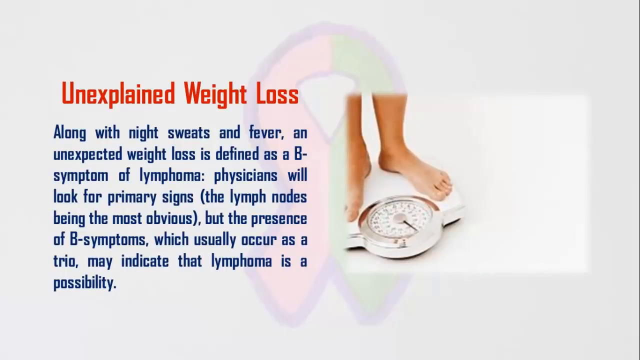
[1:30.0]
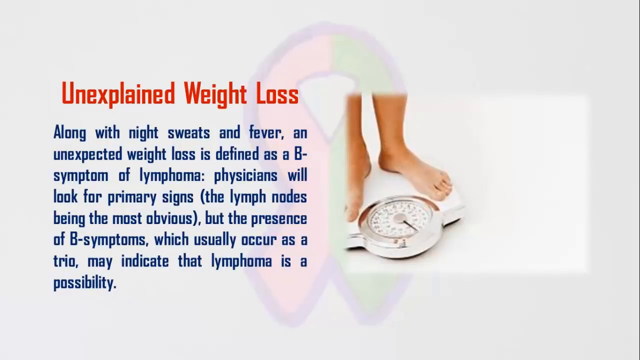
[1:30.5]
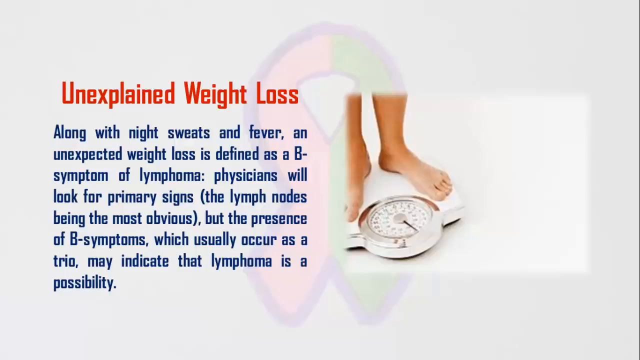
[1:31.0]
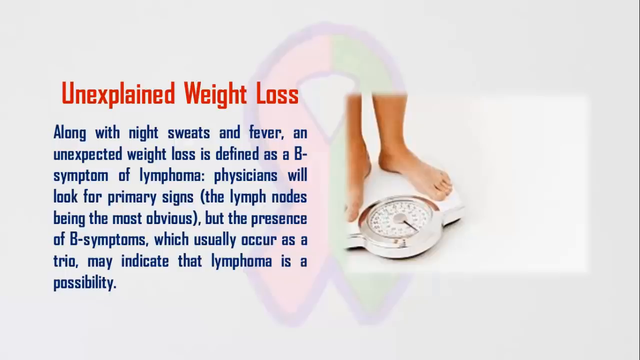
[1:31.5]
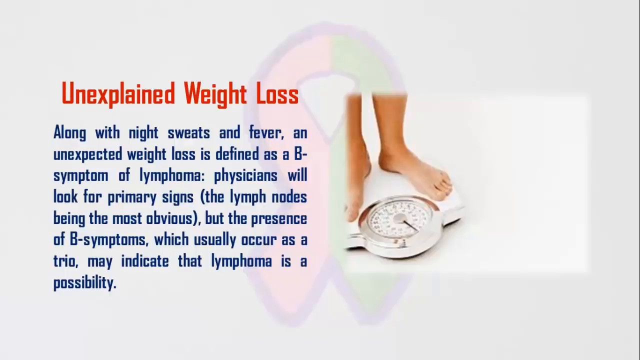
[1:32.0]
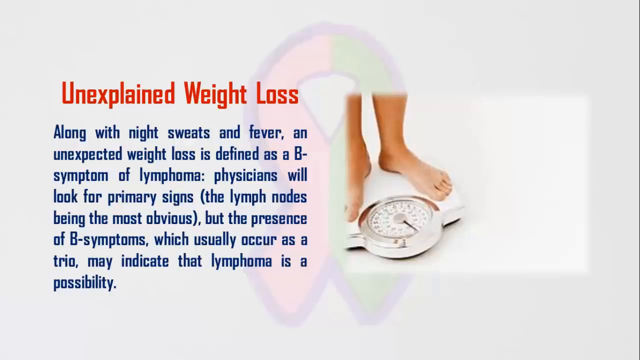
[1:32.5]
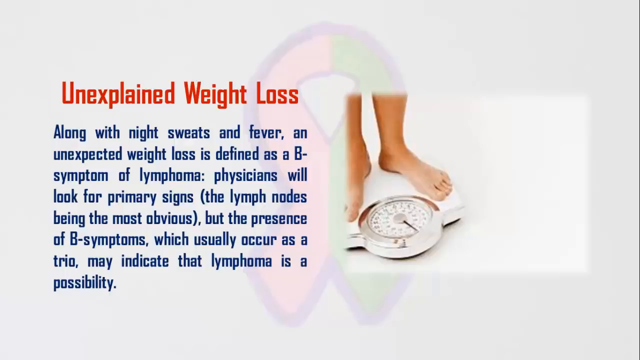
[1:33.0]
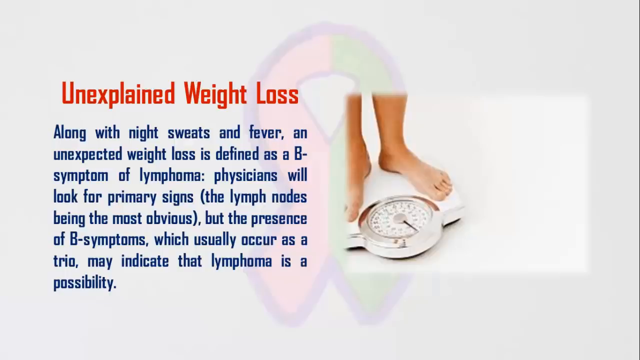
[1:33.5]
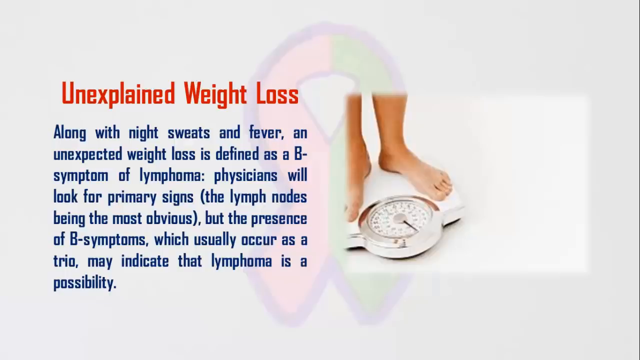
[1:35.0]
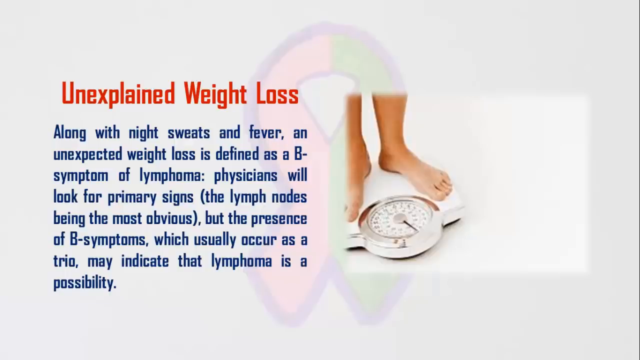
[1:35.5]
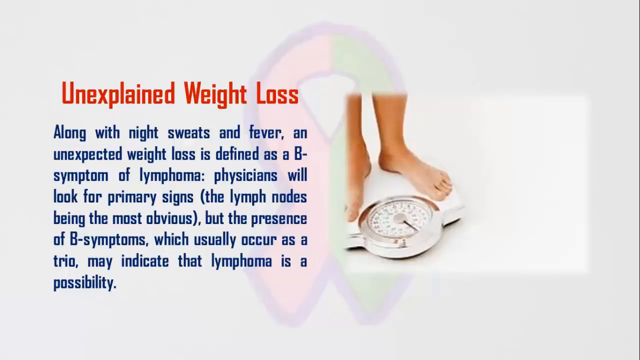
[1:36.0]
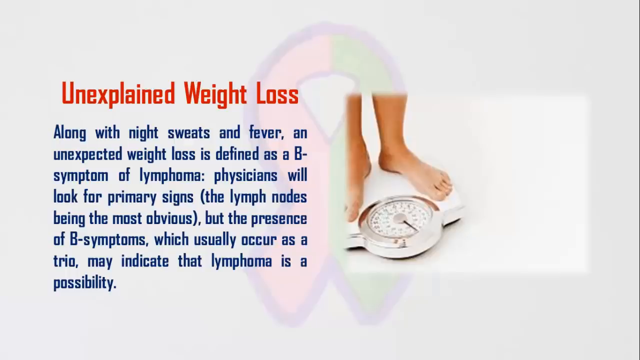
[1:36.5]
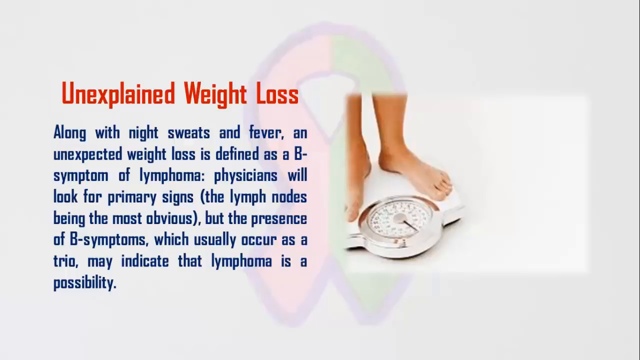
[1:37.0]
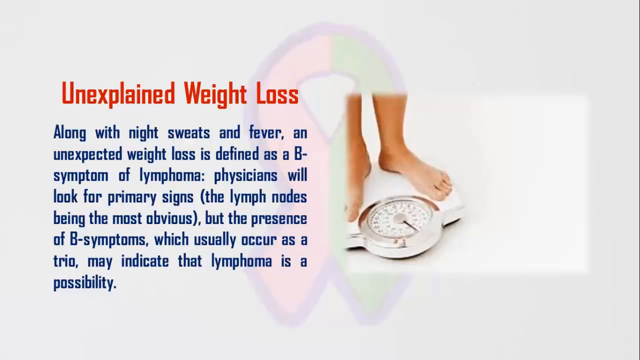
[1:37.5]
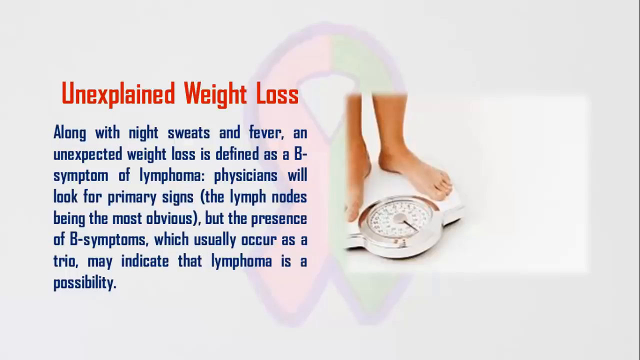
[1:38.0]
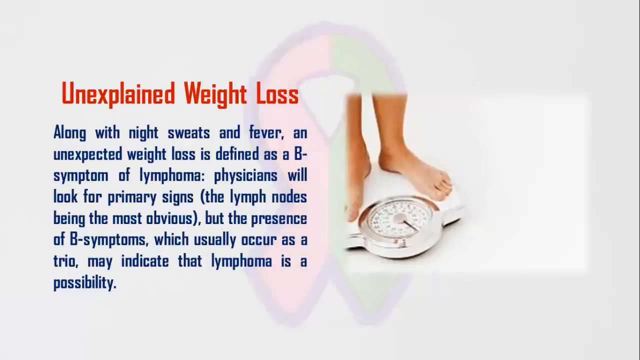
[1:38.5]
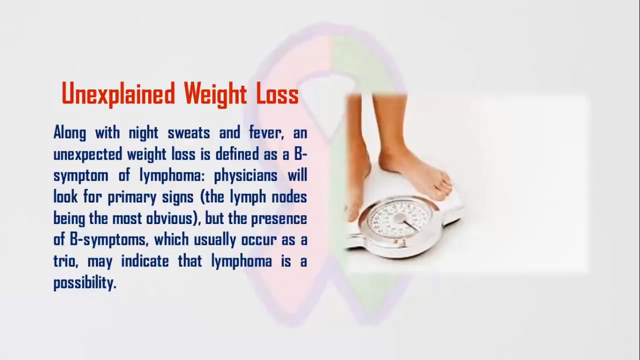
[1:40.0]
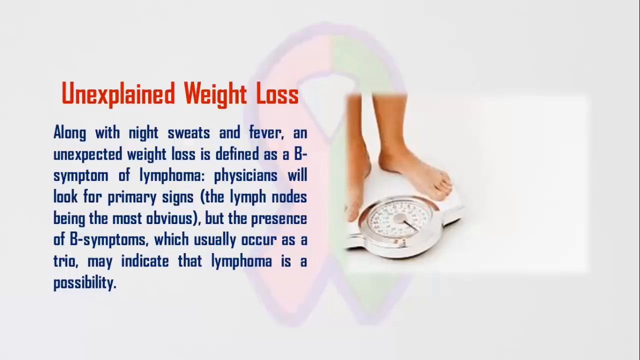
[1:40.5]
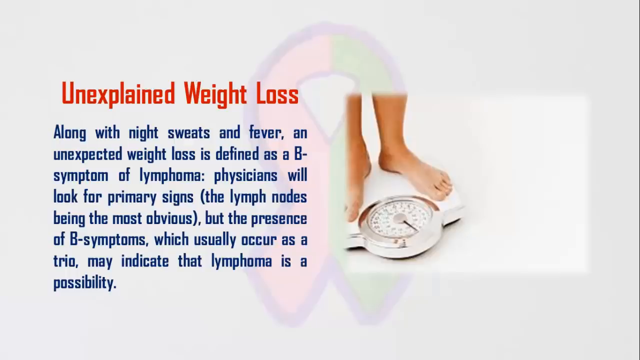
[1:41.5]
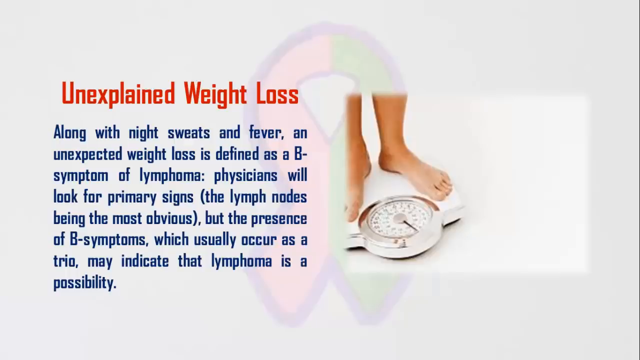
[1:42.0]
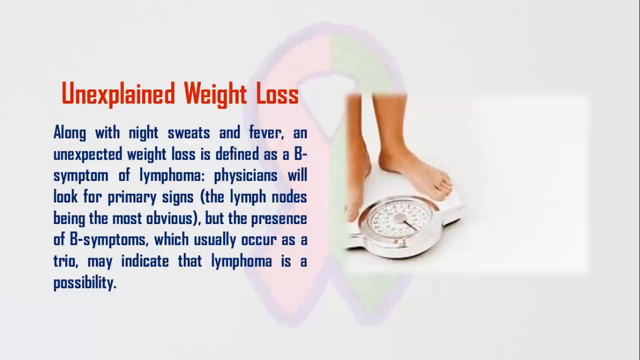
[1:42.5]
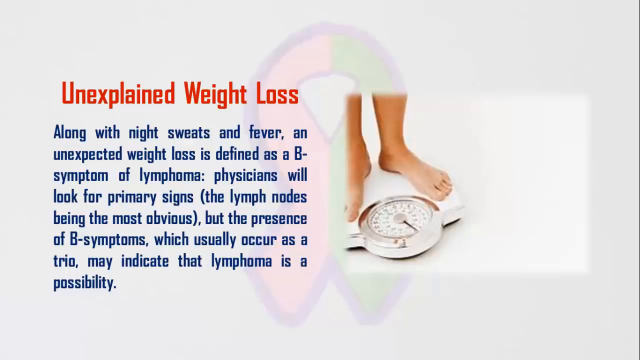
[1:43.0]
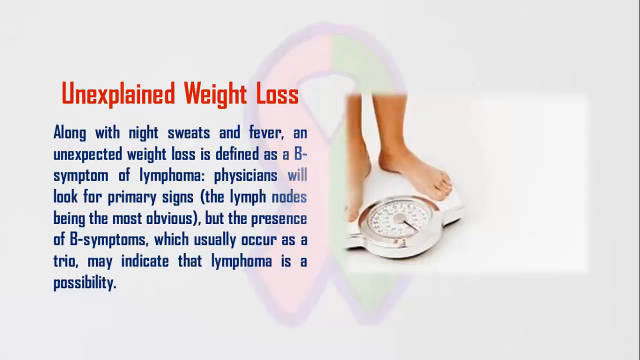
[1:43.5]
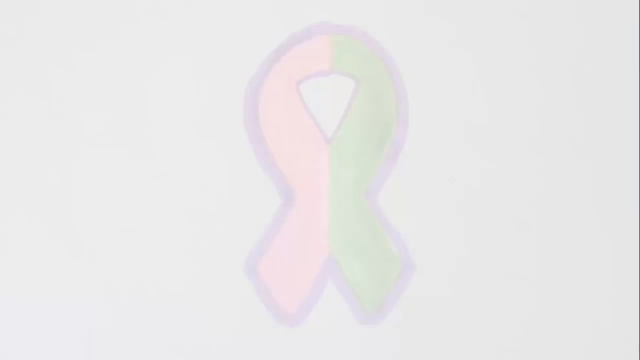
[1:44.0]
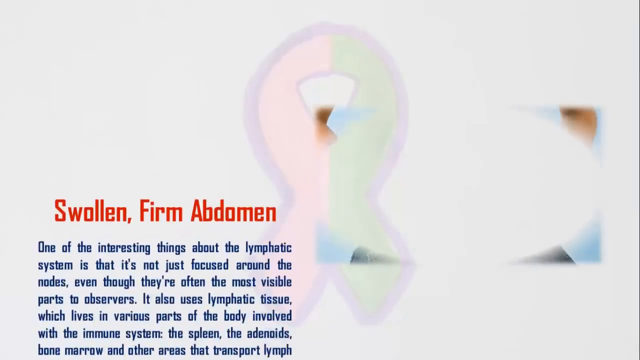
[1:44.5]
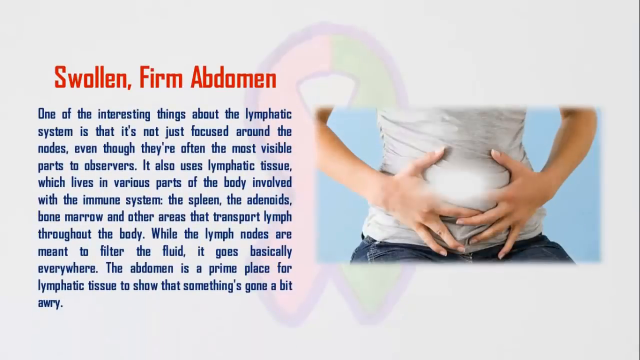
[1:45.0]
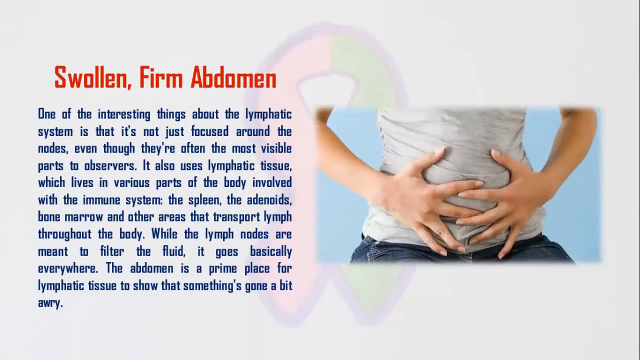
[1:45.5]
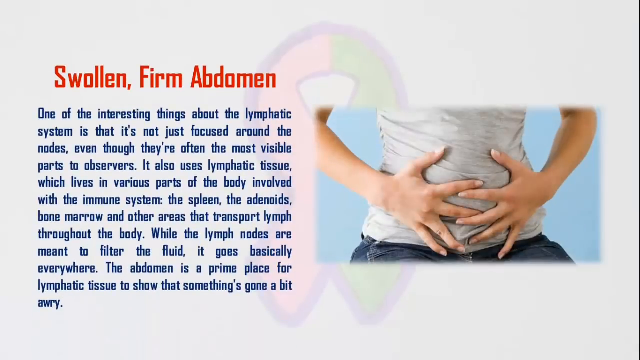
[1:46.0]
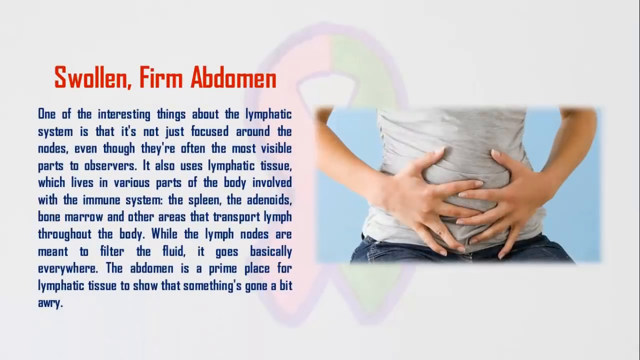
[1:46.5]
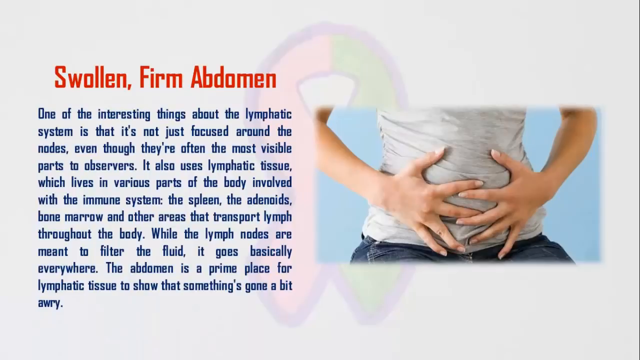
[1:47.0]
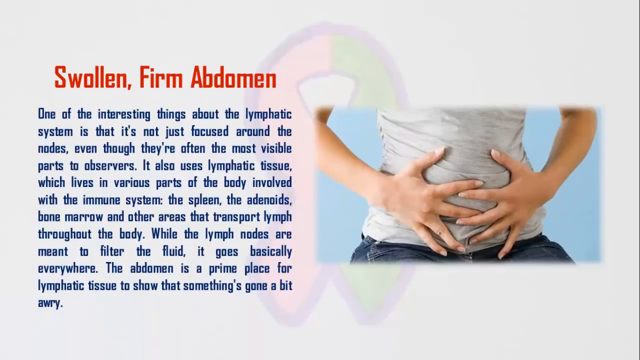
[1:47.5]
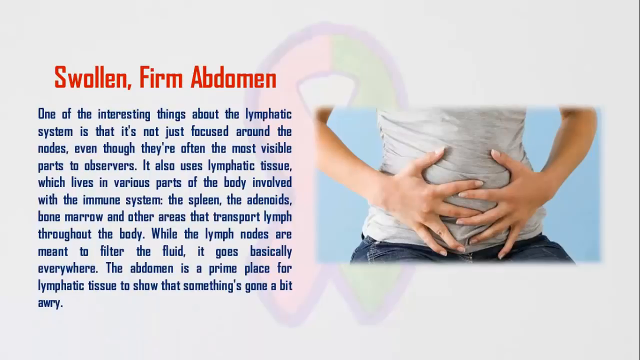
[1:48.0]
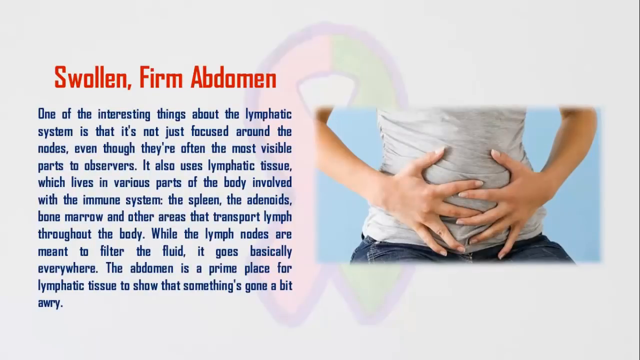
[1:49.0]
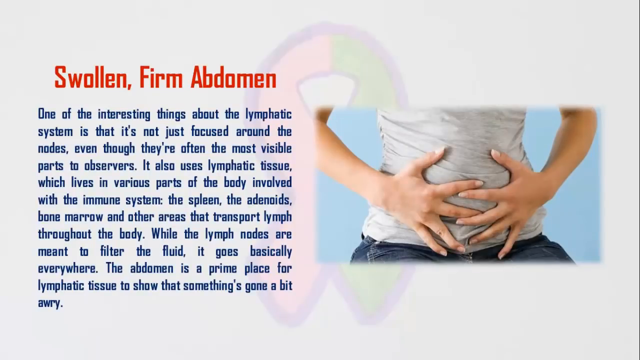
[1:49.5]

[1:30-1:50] The unexplained weight loss content fades away, slowly leaving the white background. What looks like a ribbon is still visible in the back, very fuzzy, rounded at the top and crossing itself, looking red on one side and black on the other. An image in the right middle has a light blue background and shows the midsection of a woman in a white shirt and blue jeans, with both hands, fingers completely spread, touching each other over her abdomen. On the left, large red lettering reads "swollen, firm abdomen." Underneath, blue print reads: "One of the interesting things about the lymphatic system is that it's not just focused around the nodes, even though they're often the most visible parts to observers. It also uses lymphatic tissue, which lives in various parts of the body involved with the immune system, the spleen, the adenoids, bone marrow, and other areas that transport lymph throughout the body. While the lymph nodes are meant to filter the fluid, it goes basically everywhere. The abdomen is a prime place for lymphatic tissue to show that something's gone a bit astray."